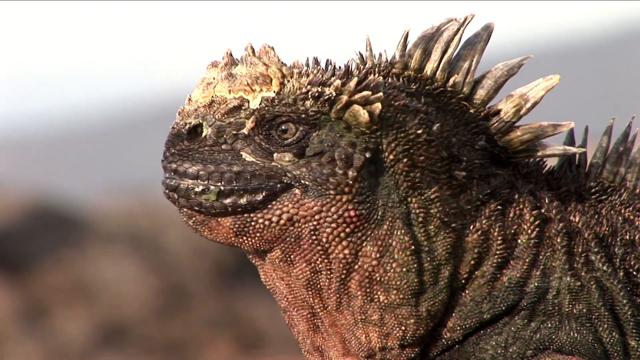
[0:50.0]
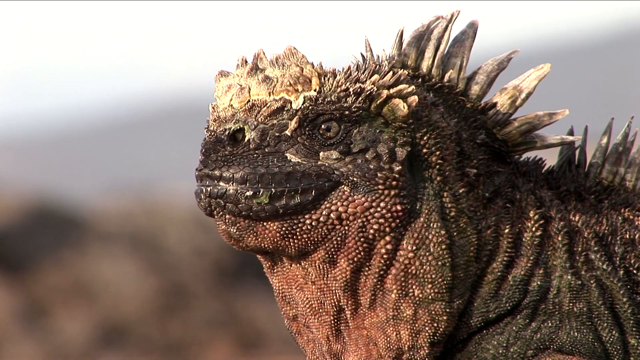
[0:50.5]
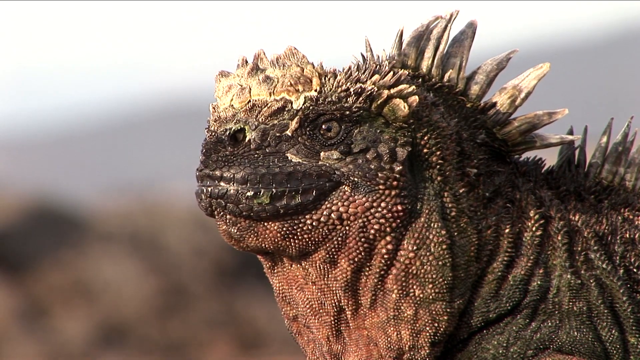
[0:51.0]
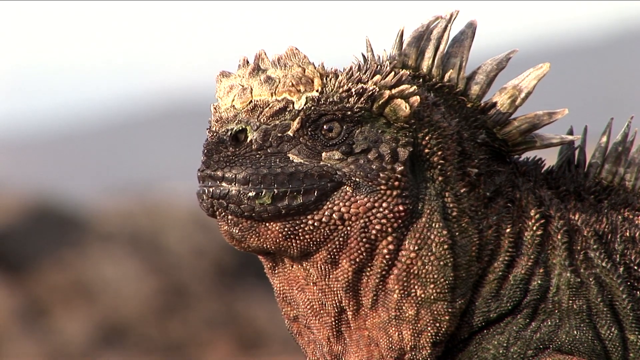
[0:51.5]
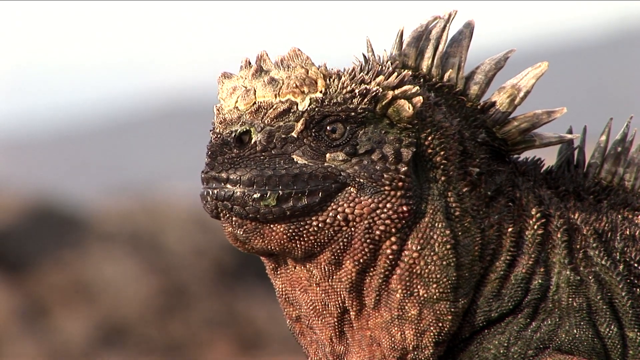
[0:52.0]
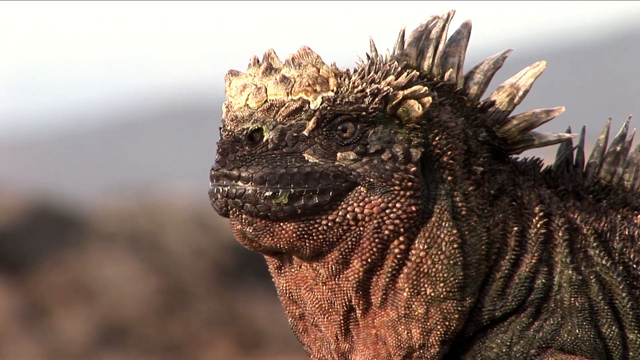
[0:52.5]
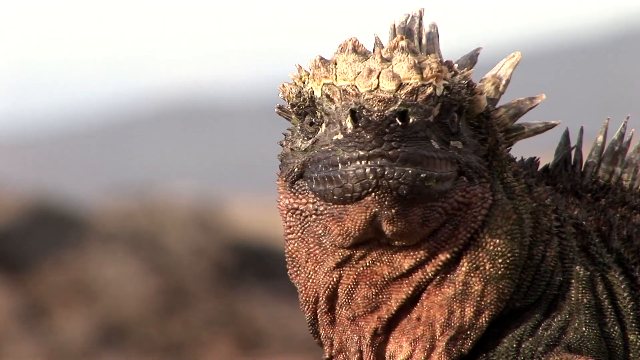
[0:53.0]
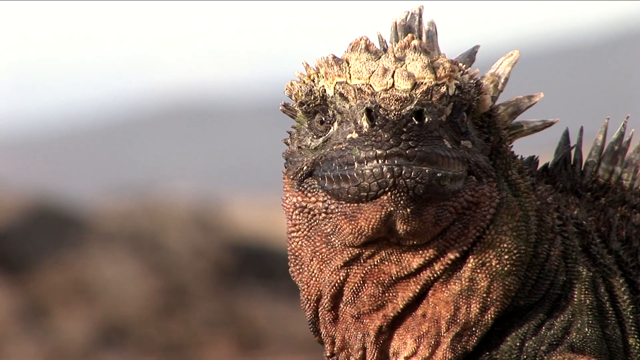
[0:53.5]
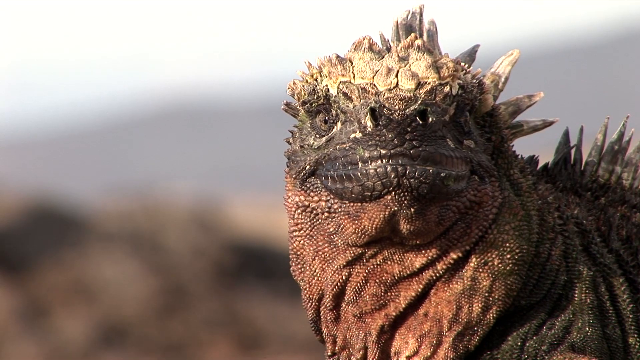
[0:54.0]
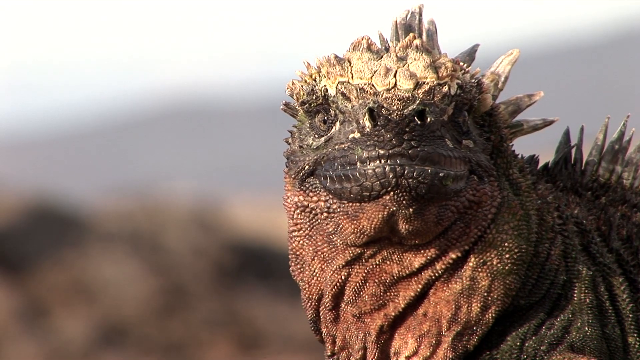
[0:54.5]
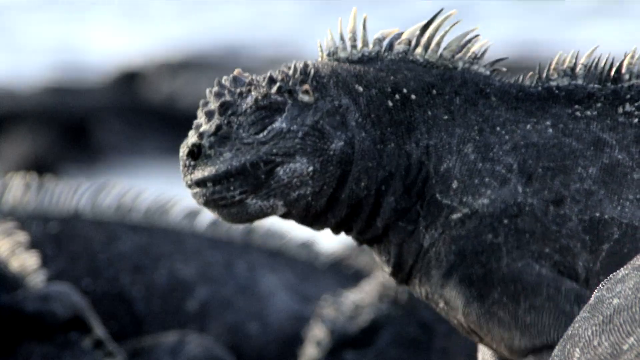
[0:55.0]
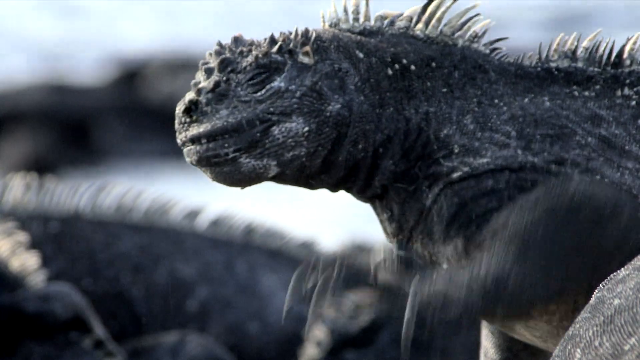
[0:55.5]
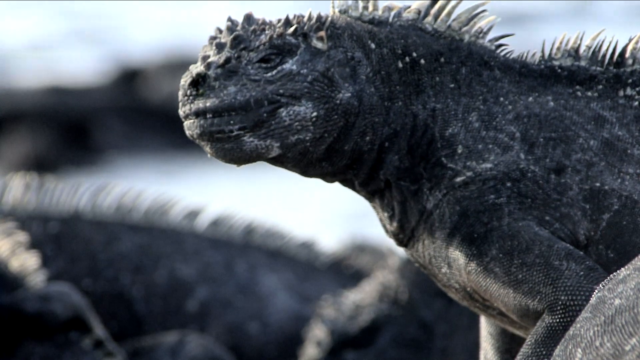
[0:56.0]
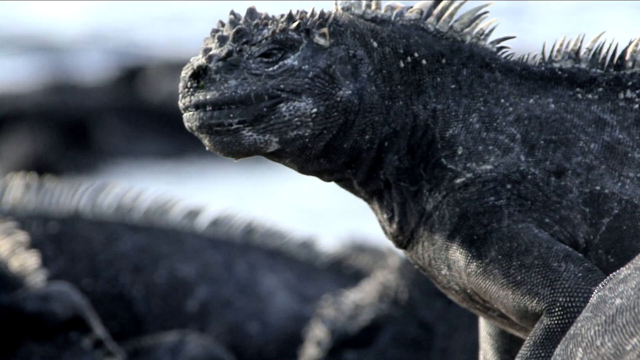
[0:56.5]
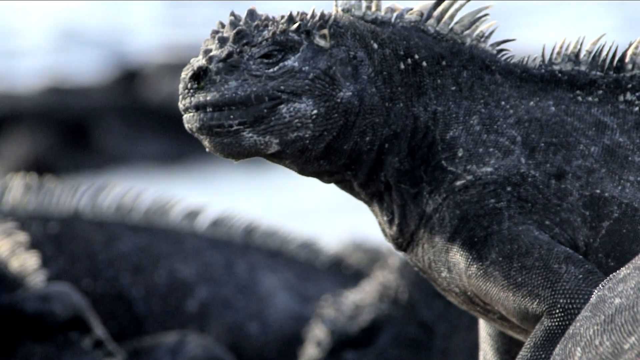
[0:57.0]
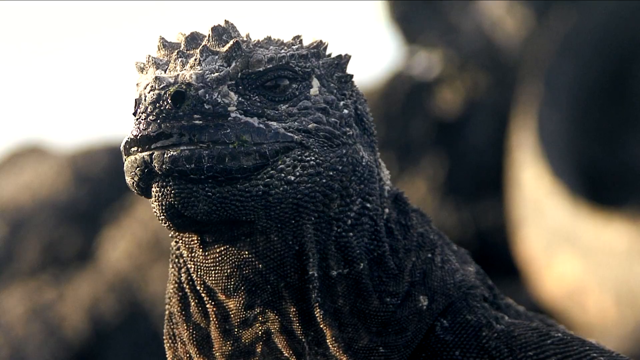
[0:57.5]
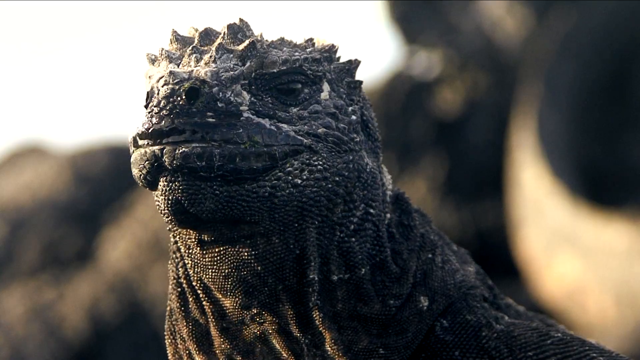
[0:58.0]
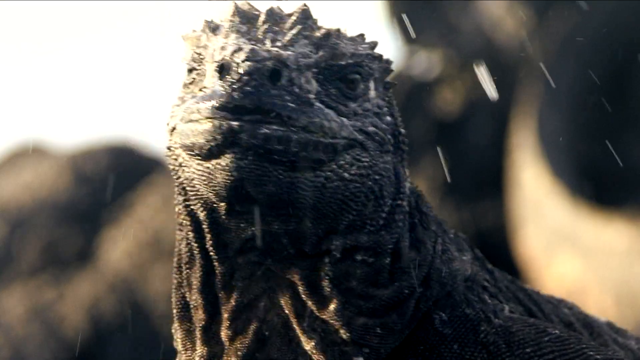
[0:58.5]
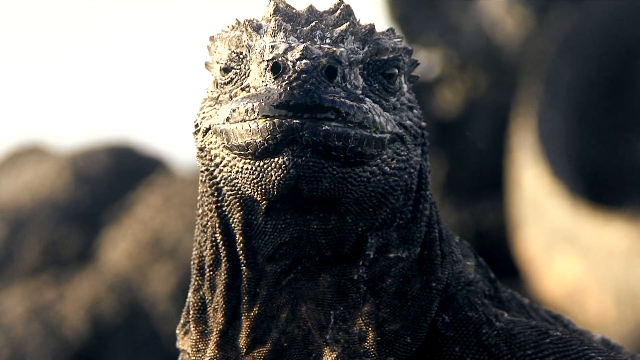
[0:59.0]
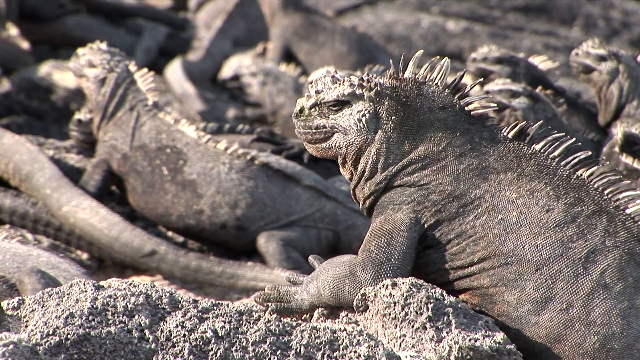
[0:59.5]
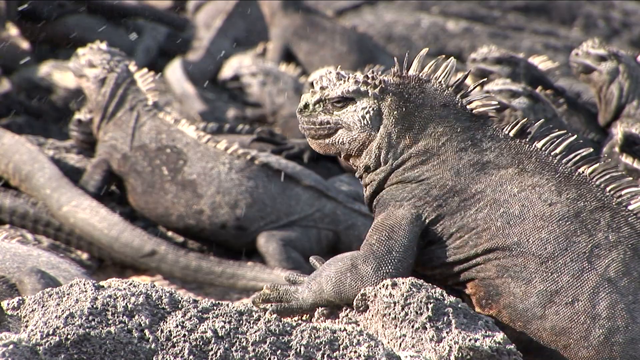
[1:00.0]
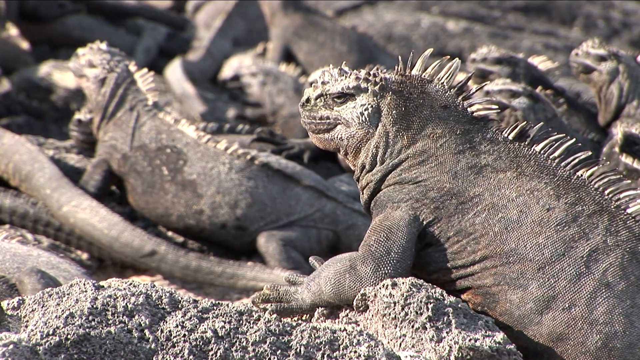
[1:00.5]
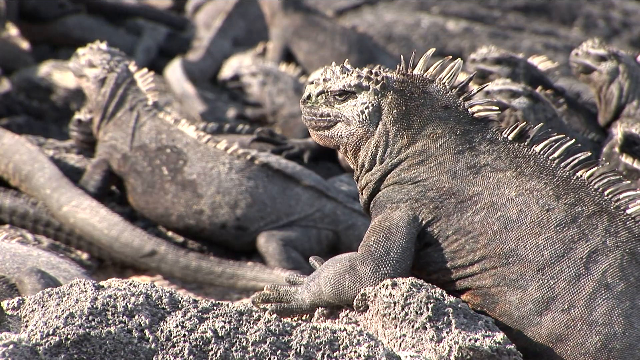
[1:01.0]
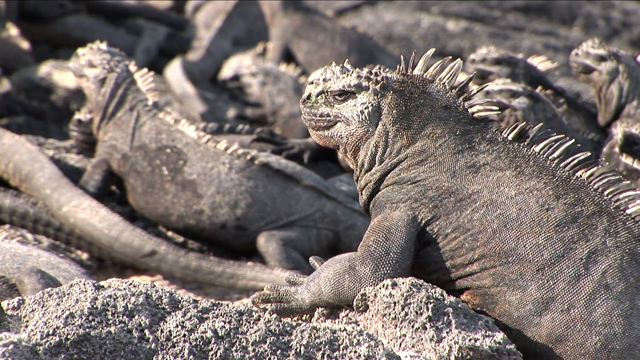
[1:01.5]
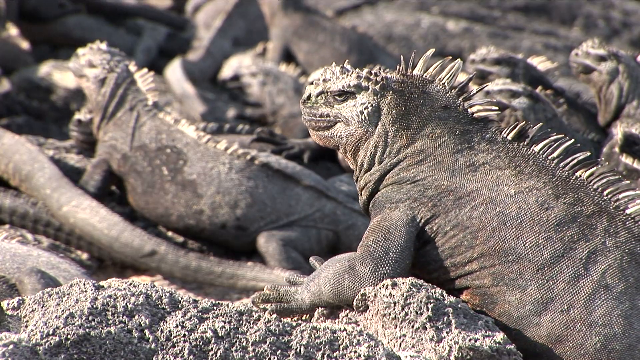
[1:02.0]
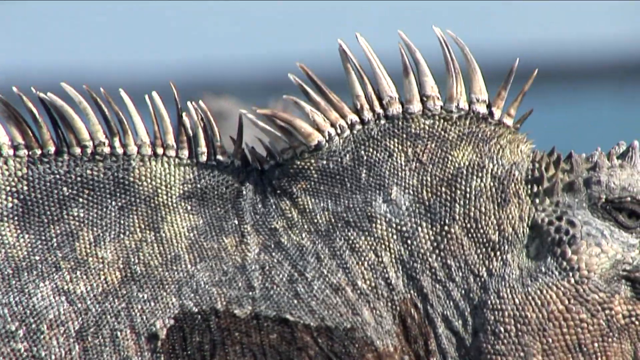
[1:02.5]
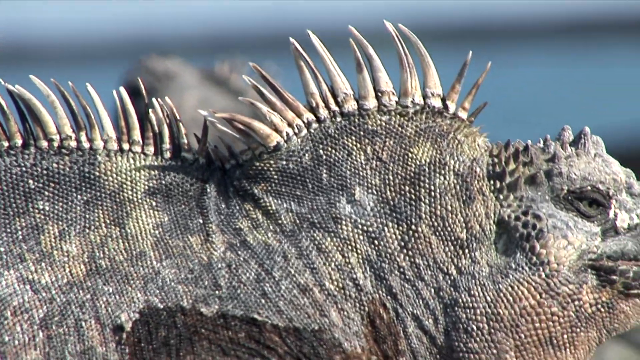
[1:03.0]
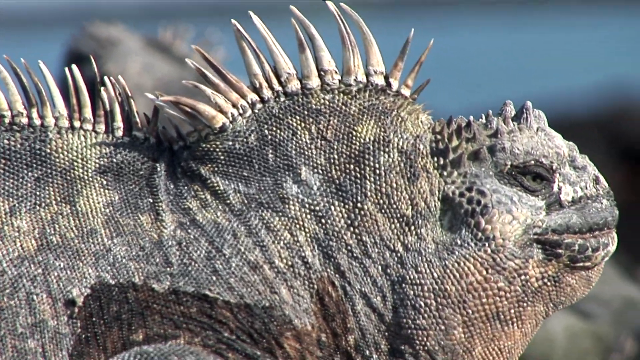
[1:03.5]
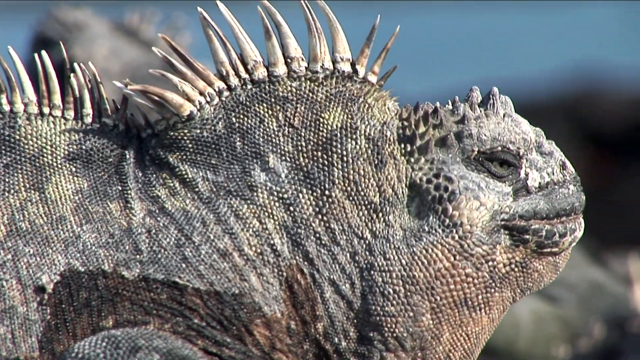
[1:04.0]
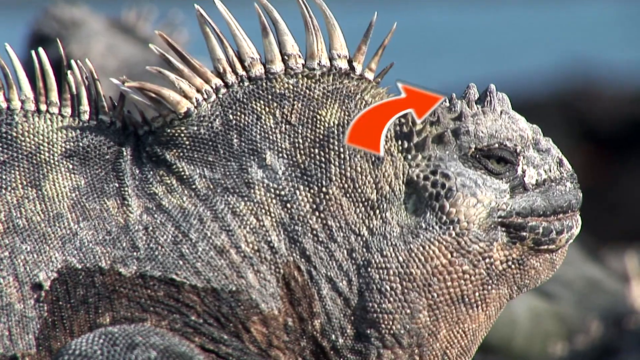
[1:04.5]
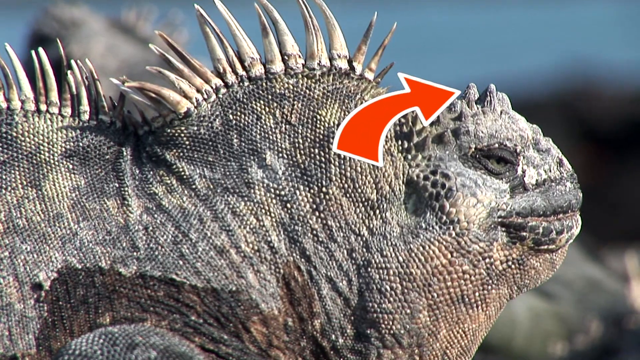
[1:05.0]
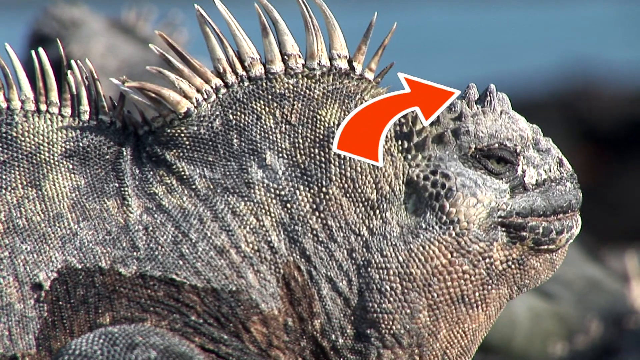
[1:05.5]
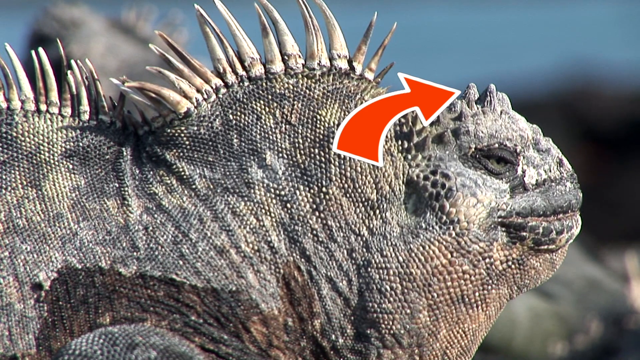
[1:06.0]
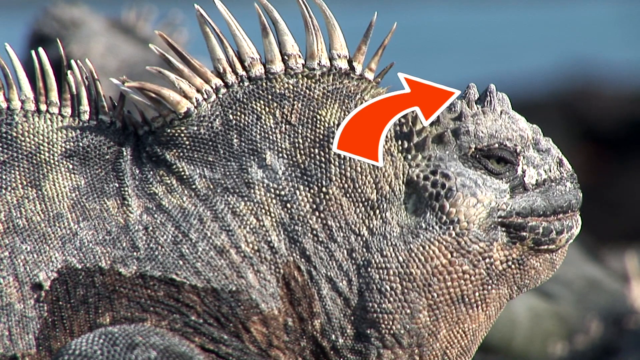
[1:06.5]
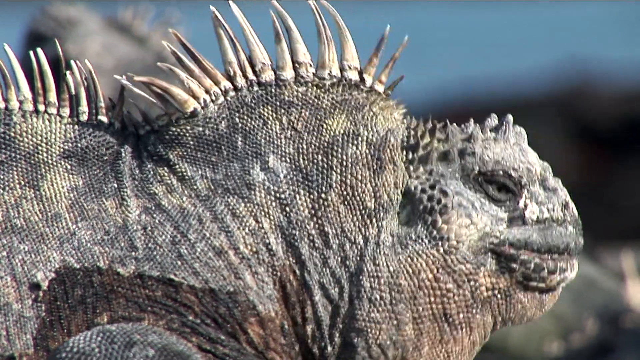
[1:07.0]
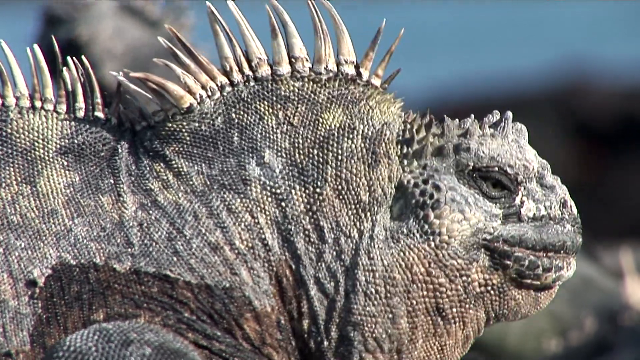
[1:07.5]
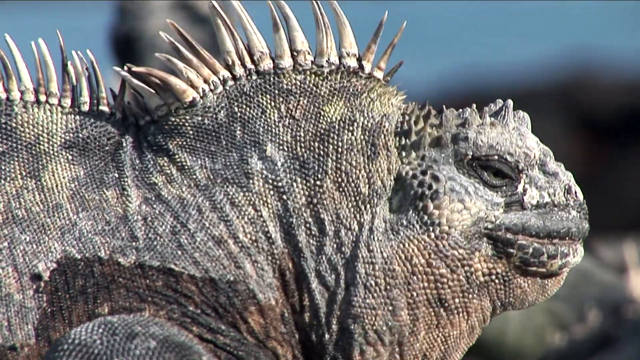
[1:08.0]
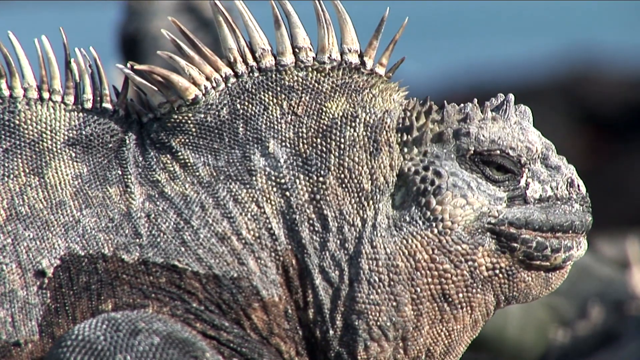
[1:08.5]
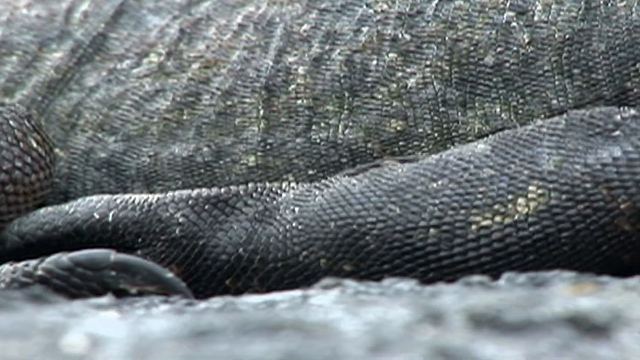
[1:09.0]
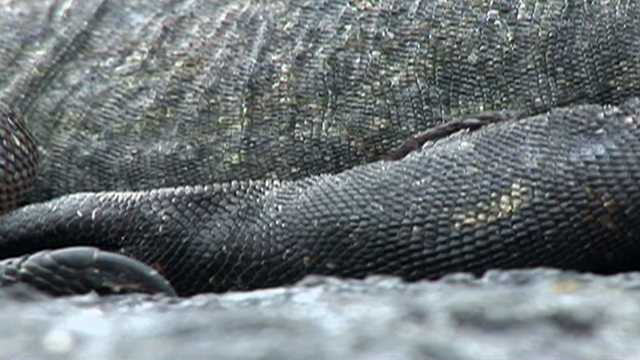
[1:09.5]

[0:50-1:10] A close-up shows the iguana from the left side of its face, with the sun shining on its face and all its scales visible. The iguana moves its head slightly to the left, its mouth is visible, and its eyes are brown. It looks directly at the camera, giving a straight-on view of its face. The scene switches to a darker one, where the iguana's scales look dark. It closes its eyes and repeatedly shoots water out through its nose, looking as if it is sunbathing and breathing slowly. The scenery moves from a scene in the sun to one in the darkness of the shade and into another scene in the sun. There are multiple iguanas in the other scenes; they seem to be a whole herd or family, all resting on land and drying off from the water. The main focus is this one iguana and its actions.